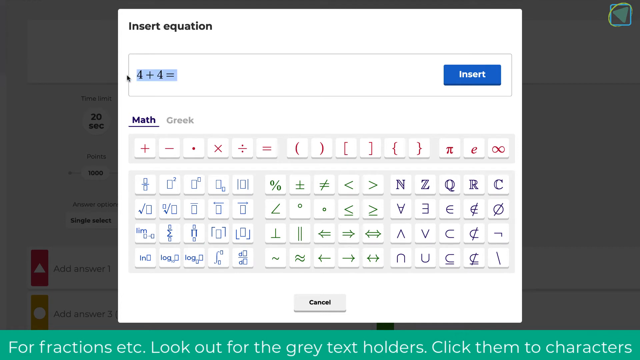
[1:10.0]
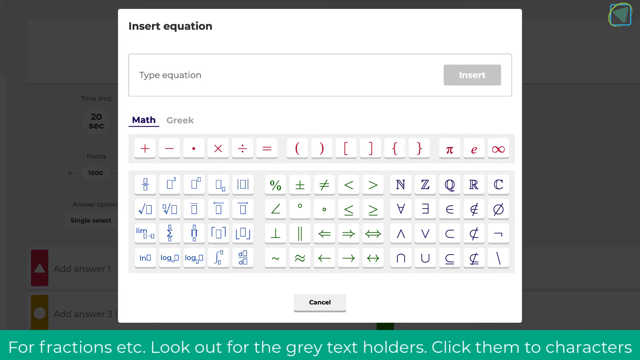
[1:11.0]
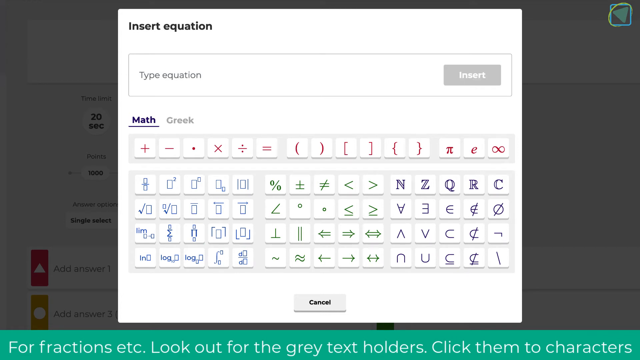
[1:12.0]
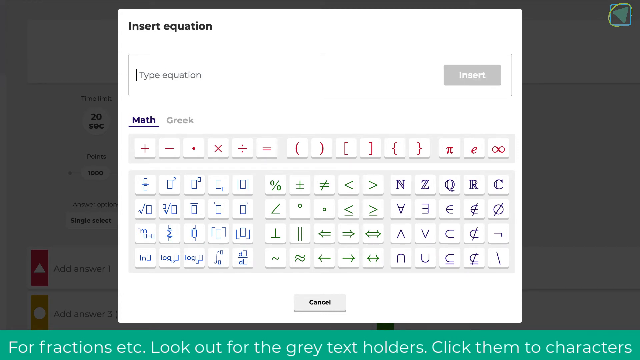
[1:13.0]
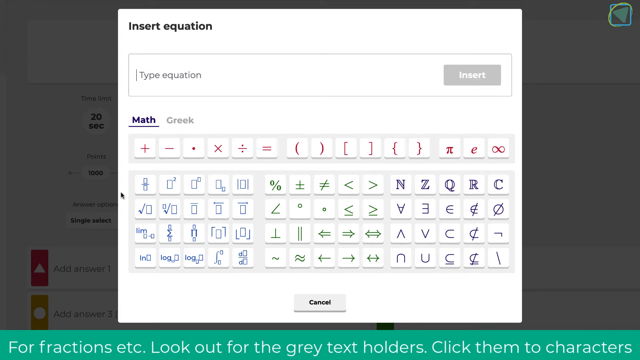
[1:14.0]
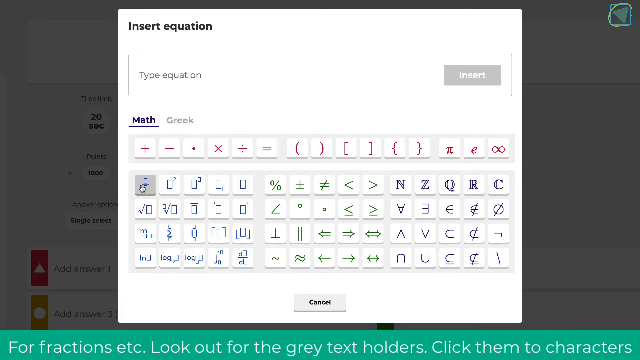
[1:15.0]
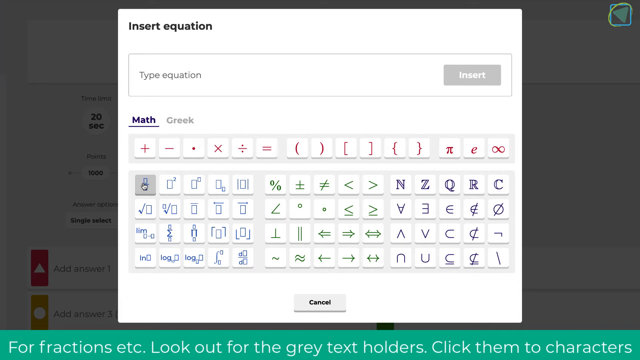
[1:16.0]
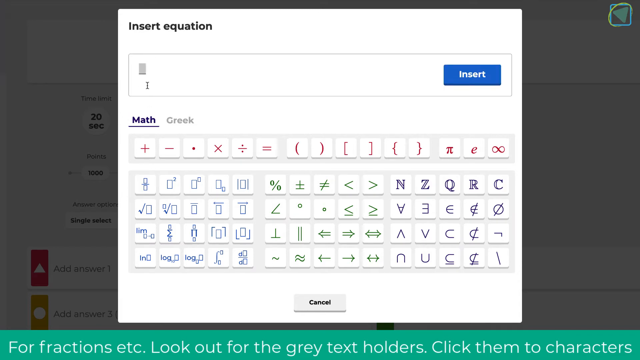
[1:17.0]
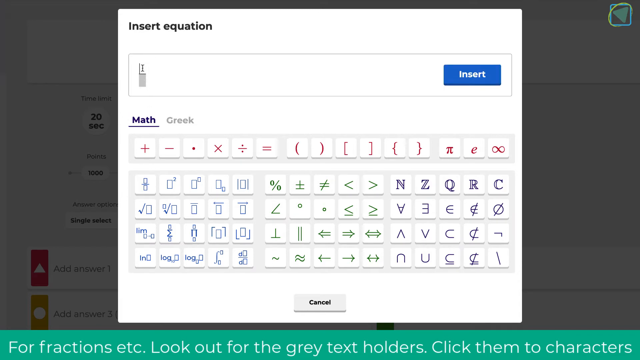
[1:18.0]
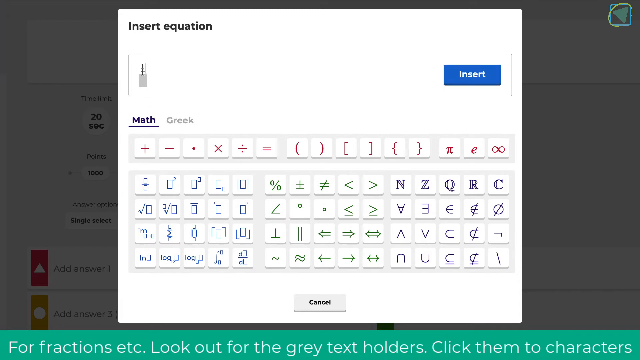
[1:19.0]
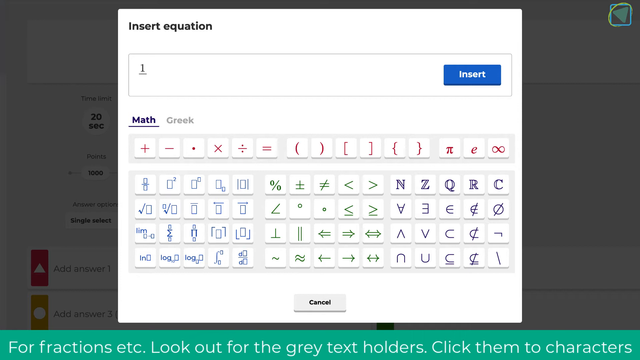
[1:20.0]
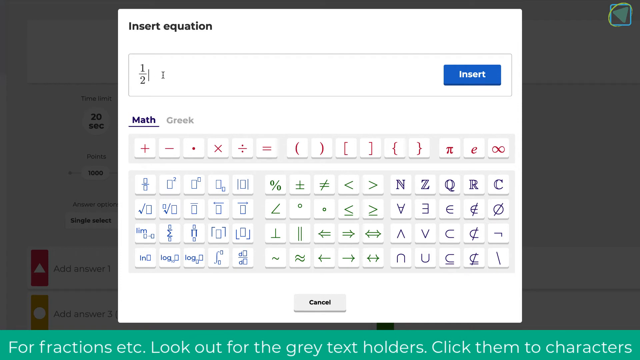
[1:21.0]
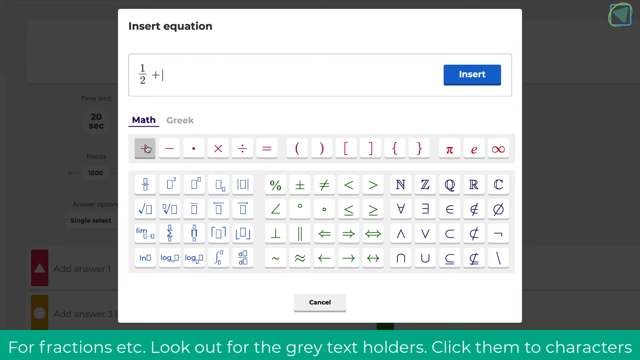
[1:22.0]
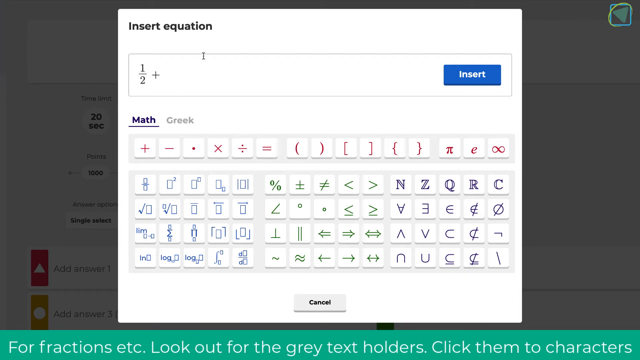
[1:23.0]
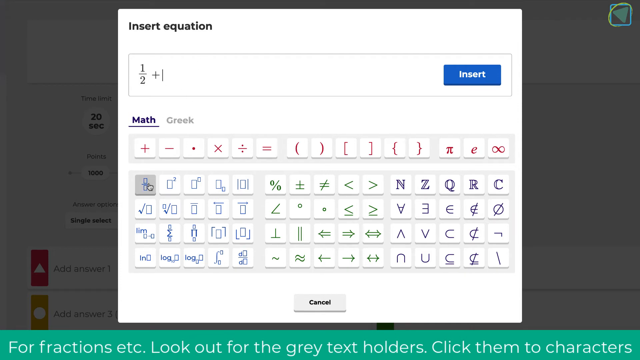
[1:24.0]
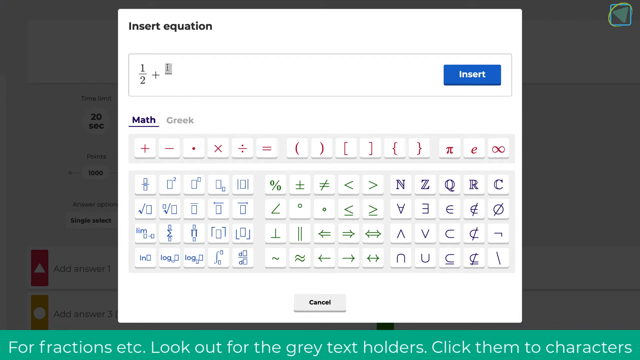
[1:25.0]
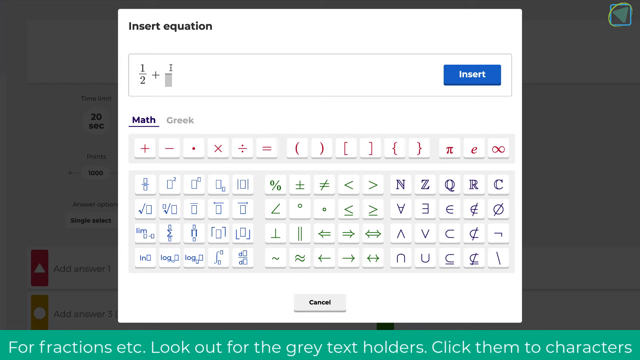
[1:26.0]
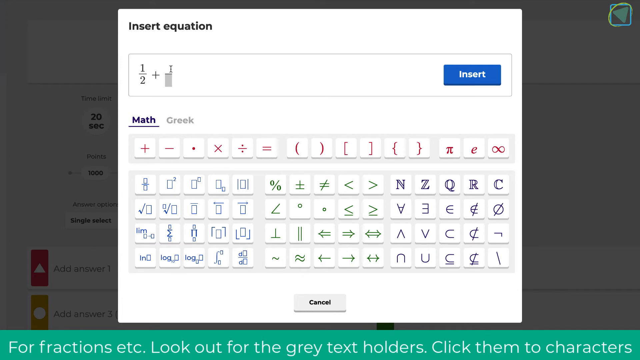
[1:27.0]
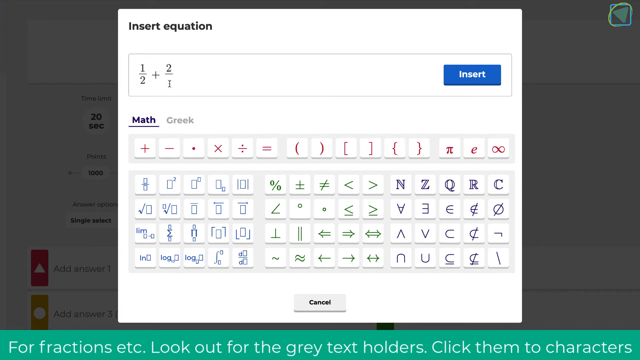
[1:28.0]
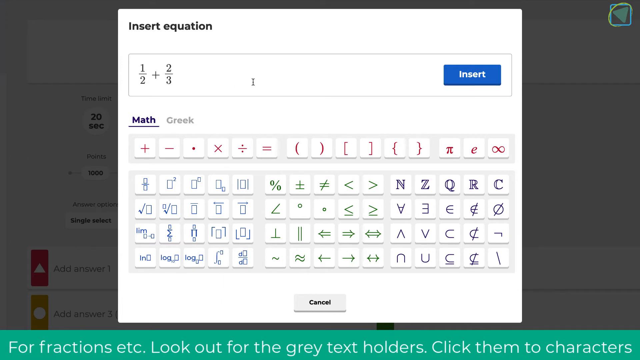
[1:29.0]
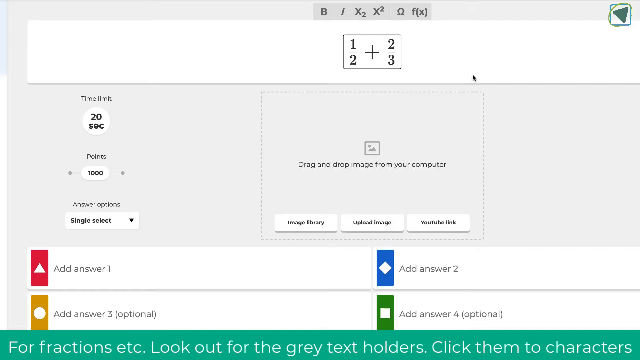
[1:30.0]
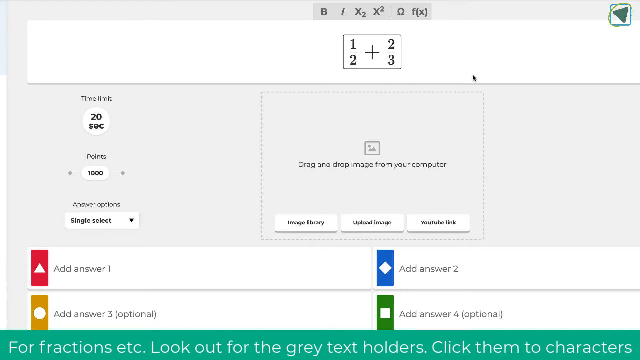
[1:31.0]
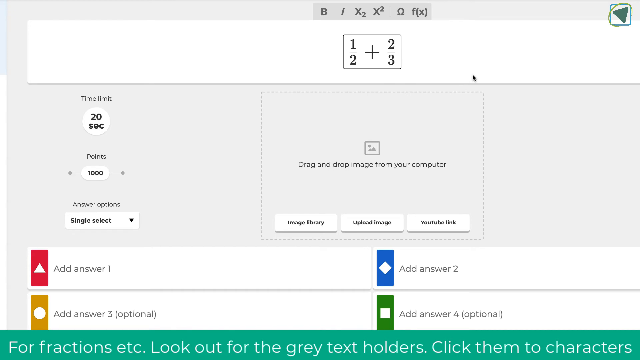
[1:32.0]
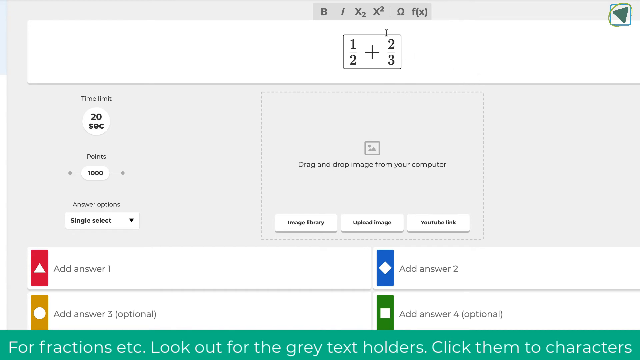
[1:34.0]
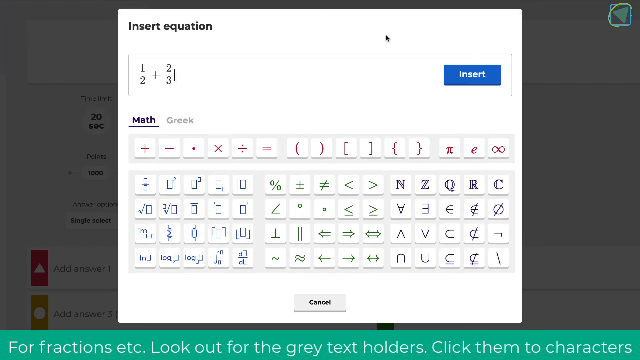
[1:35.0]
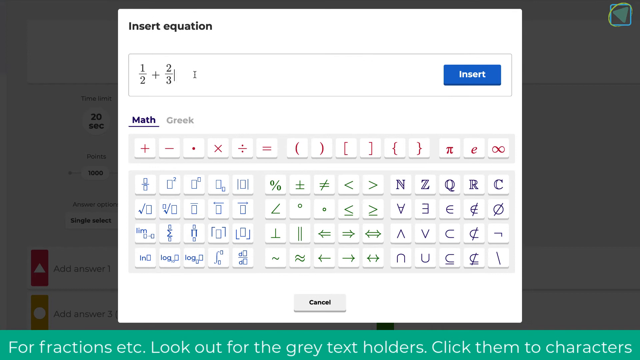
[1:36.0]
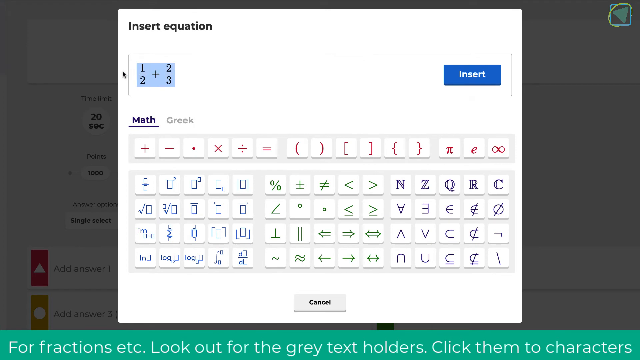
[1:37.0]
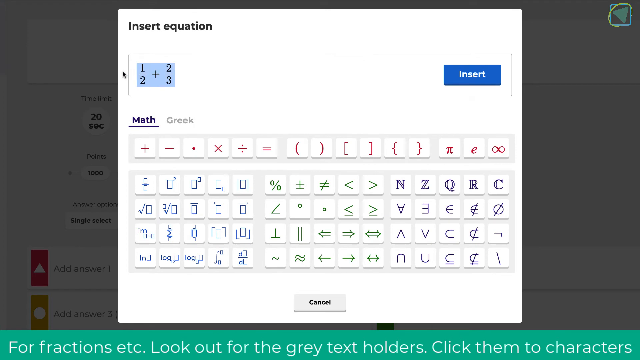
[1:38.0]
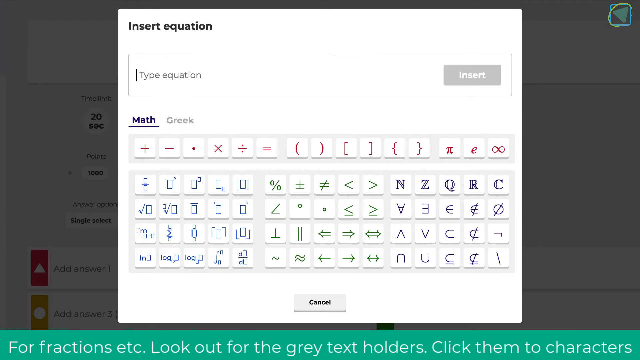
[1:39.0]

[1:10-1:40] In the equation editor, with "4 + 4 =" highlighted, he seems to delete it, since it is gone. He moves his cursor down to the buttons in the equation editor toward an empty fraction symbol: a square, a horizontal line, and another square just below it. Clicking it adds the symbol to the equation editor box. He clicks on the top square and types 1, then types 2 in the bottom, making one half. He clicks the plus sign and adds another fraction with 2 on top and 3 on the bottom, creating the equation 1/2 + 2/3. He moves his cursor to the blue insert button, and the equation becomes his title: the word "Solve" and the "4 + 4 =" are gone, leaving one half plus two thirds. He then moves his cursor back to the equation, clicks it, opens the equation editor, and highlights the equation he just made.